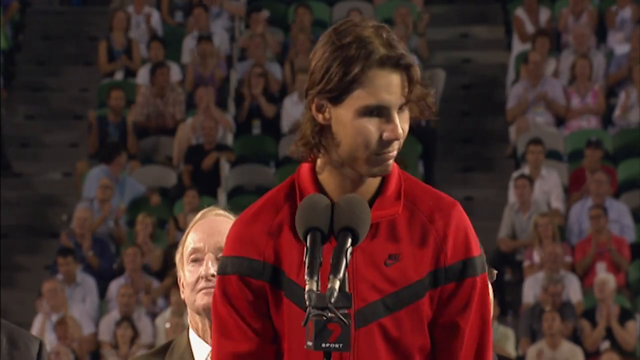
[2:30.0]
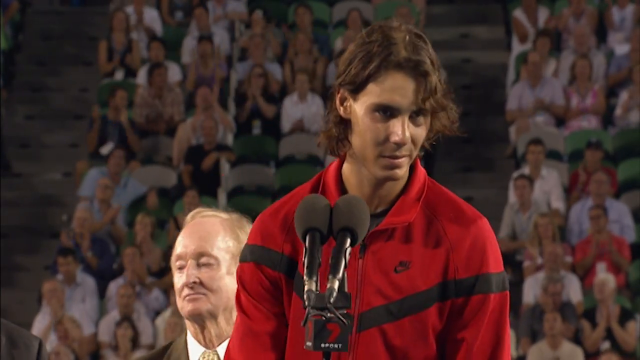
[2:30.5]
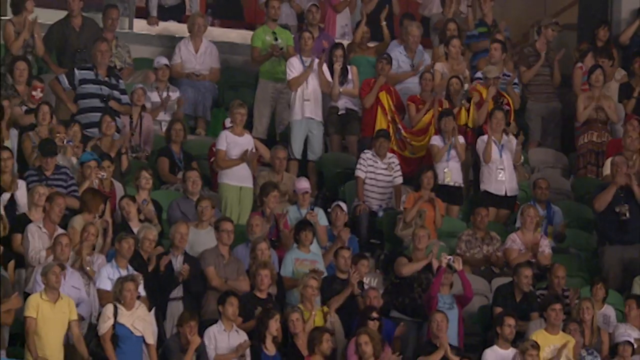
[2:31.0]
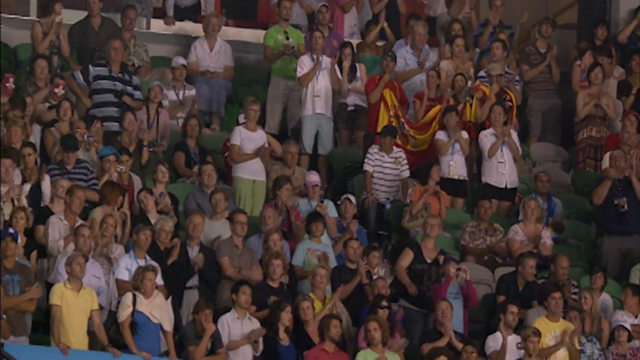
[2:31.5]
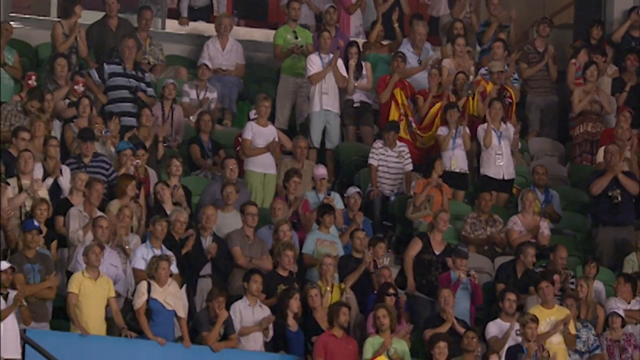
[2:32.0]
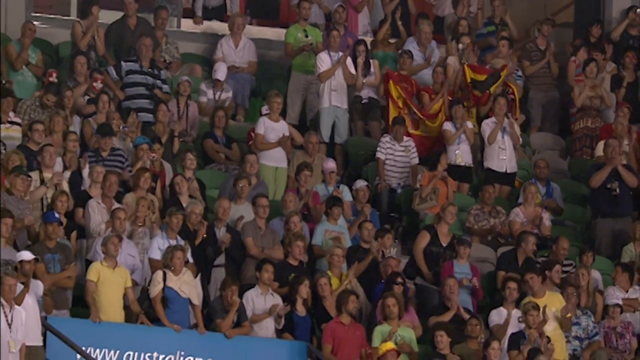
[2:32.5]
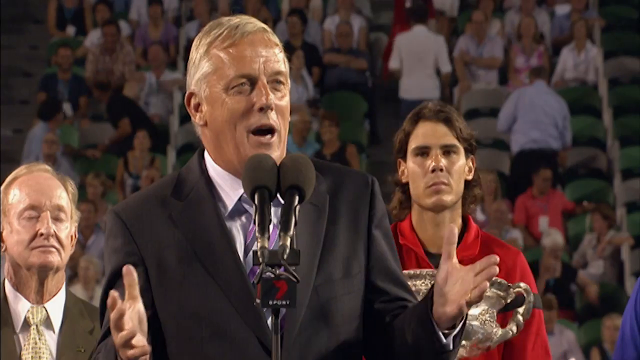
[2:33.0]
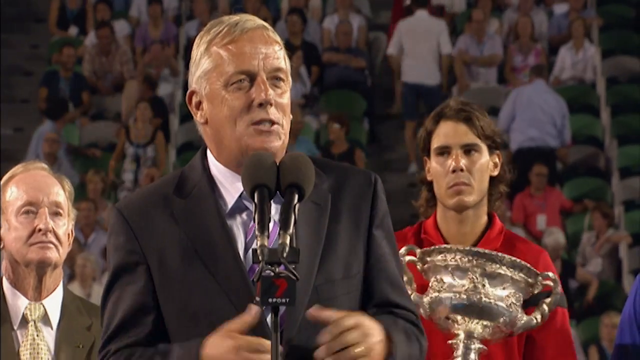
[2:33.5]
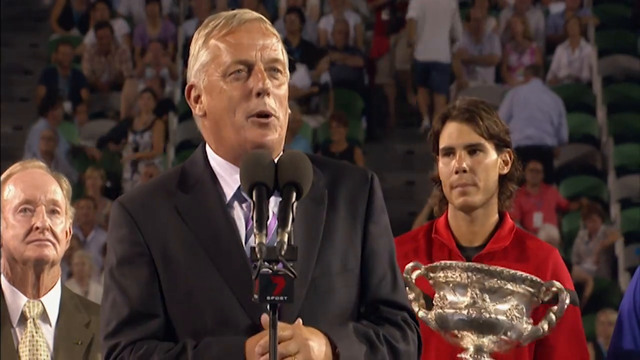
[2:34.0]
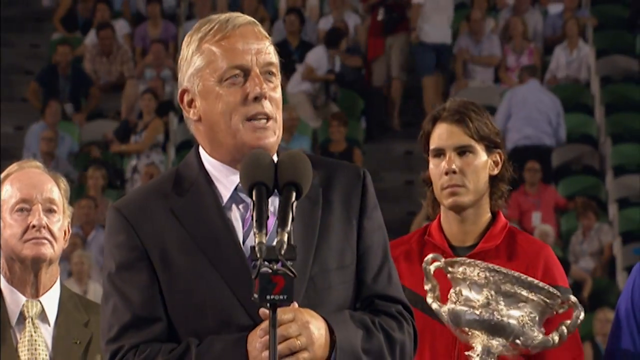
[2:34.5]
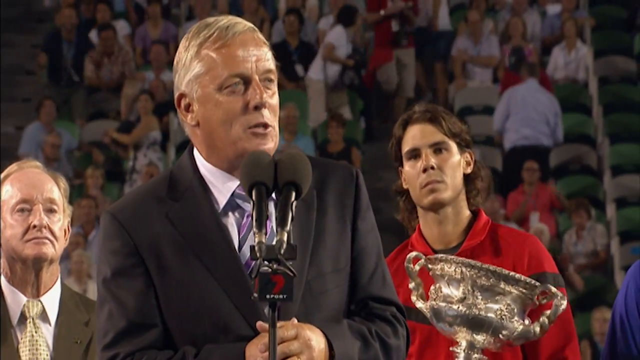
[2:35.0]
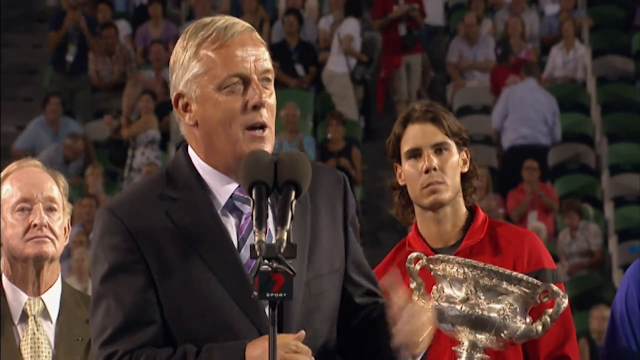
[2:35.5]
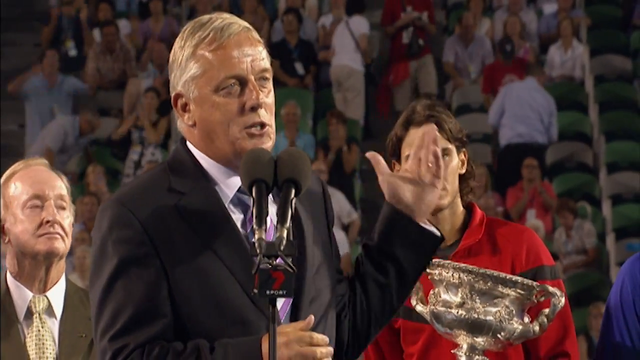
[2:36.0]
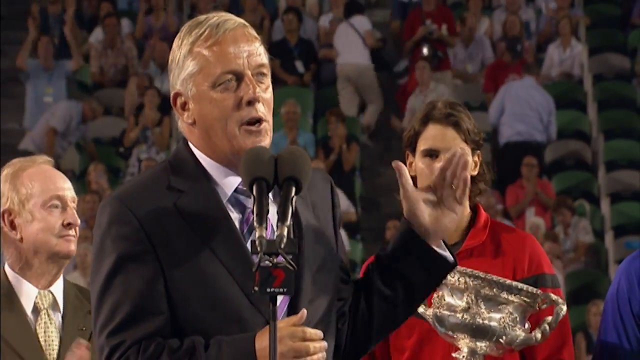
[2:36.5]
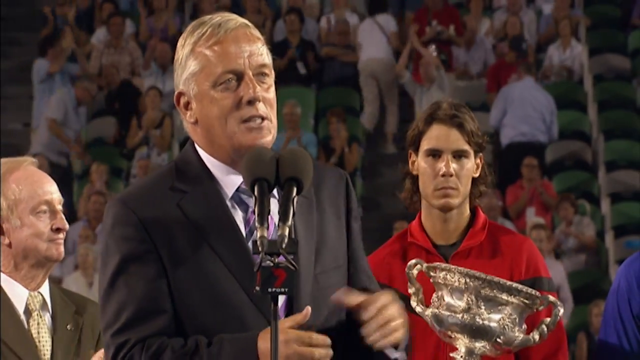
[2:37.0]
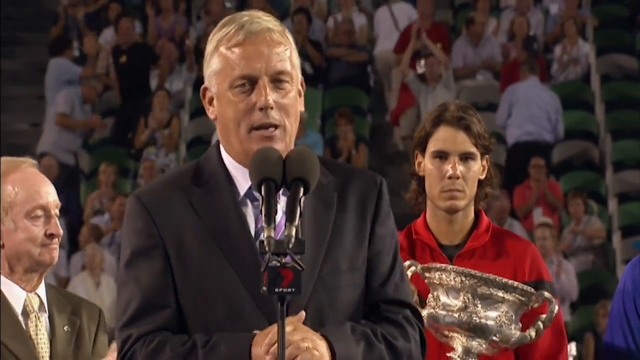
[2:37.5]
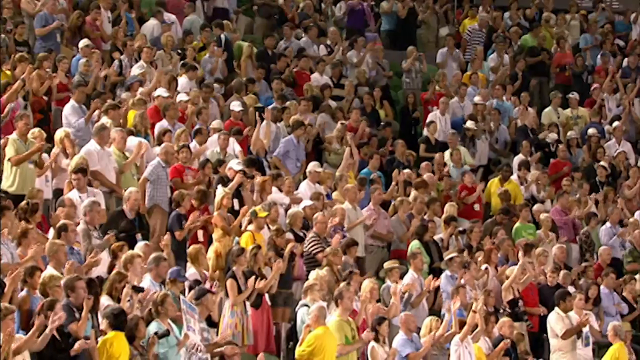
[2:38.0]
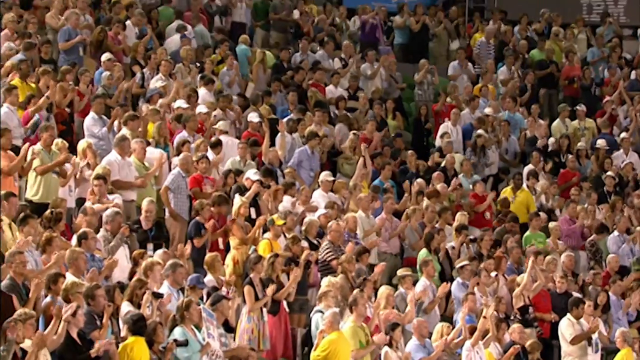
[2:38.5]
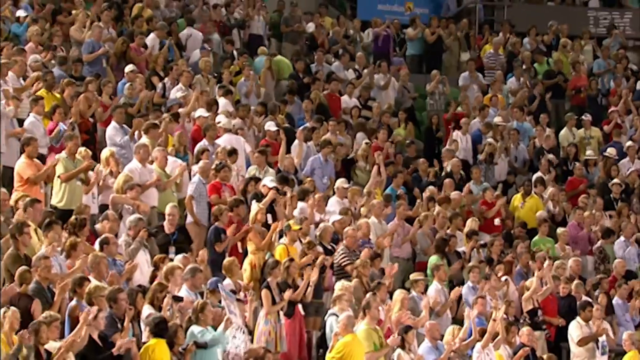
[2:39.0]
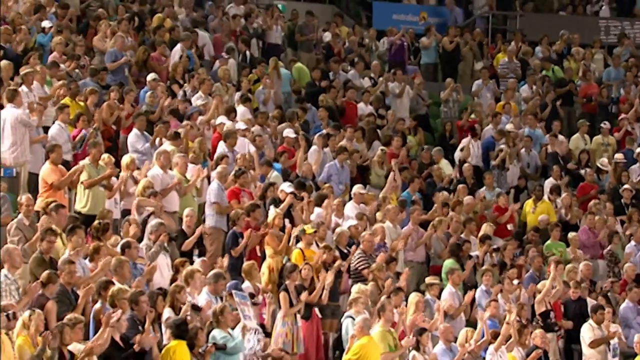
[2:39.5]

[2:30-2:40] One of the managers talks a bit fast, pointing his hand toward the players. He wears a black suit, white t-shirt and white purple tie; the man on his left wears a darker grey suit, white t-shirt and white and grey tie, and the manager behind the speaker claps. The managers appear to be all men. Rafael holds his cup and Roger holds his silver trophy. Fans clap, most standing, and some hold a Spain flag. Most of the fans start to leave, heading upstairs to the exit. Rafael says "thank you" into the mic.